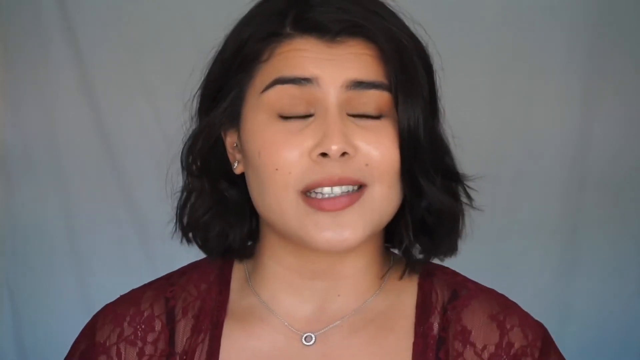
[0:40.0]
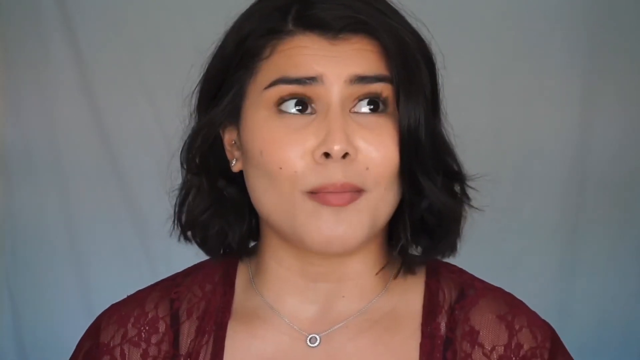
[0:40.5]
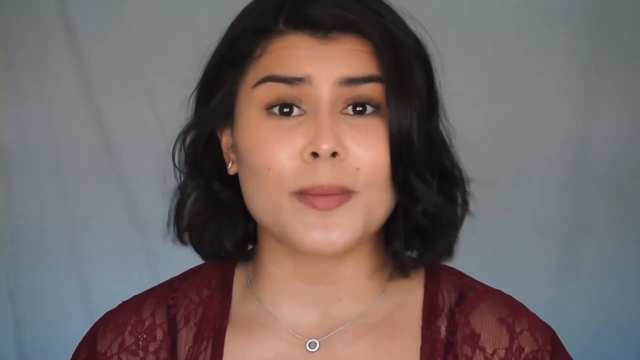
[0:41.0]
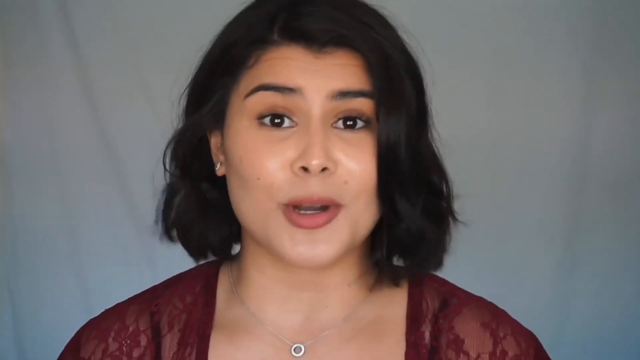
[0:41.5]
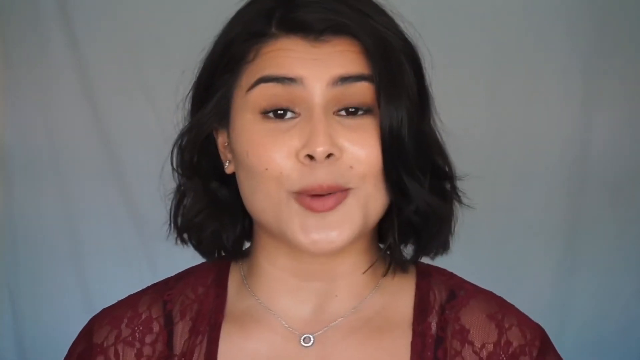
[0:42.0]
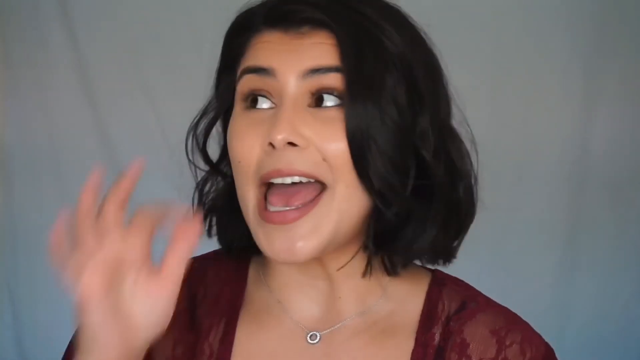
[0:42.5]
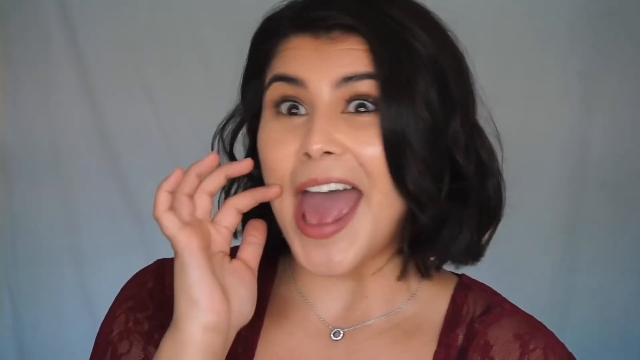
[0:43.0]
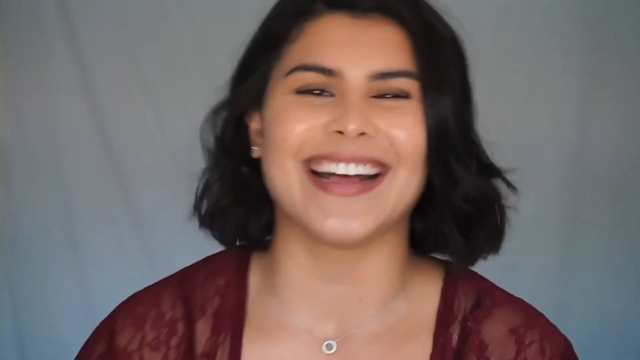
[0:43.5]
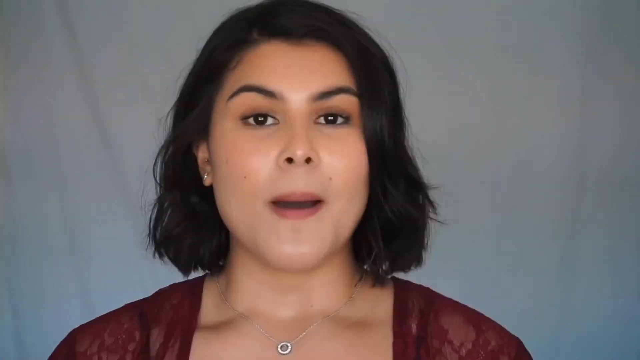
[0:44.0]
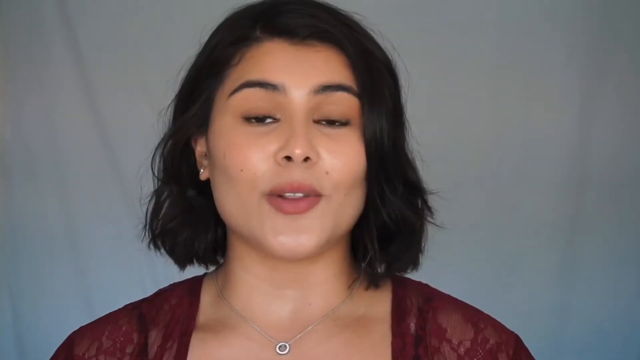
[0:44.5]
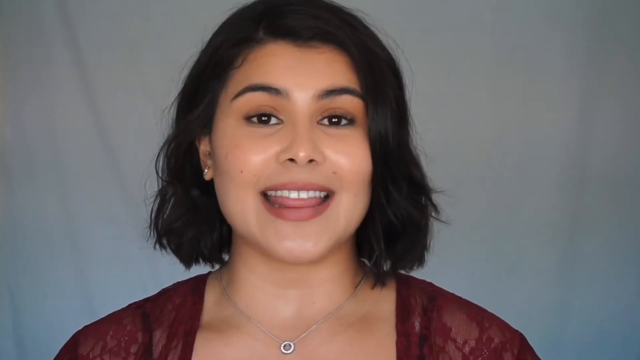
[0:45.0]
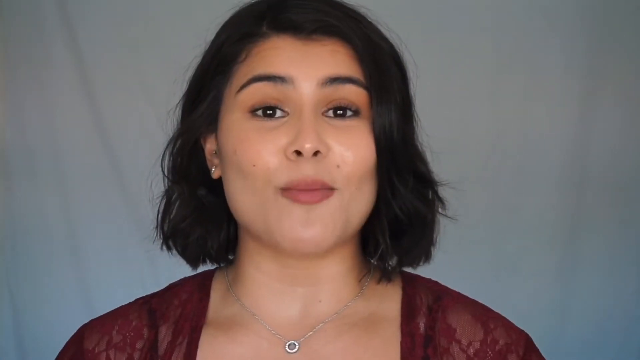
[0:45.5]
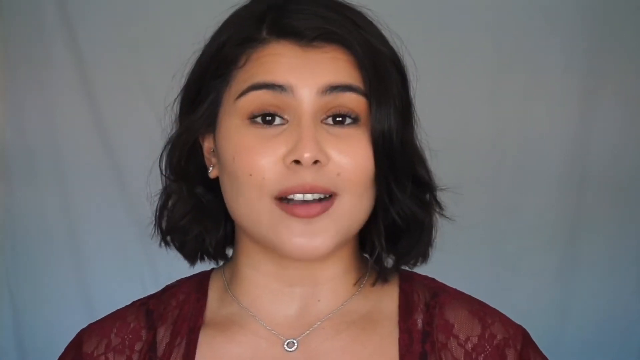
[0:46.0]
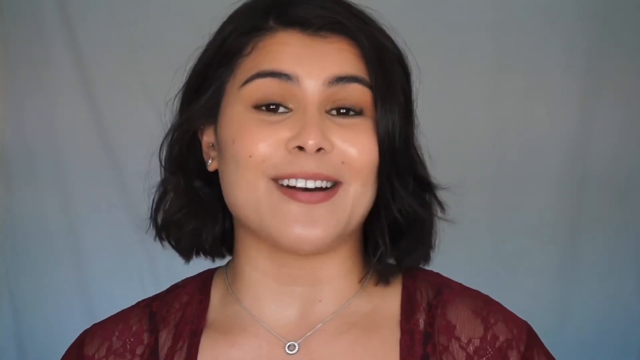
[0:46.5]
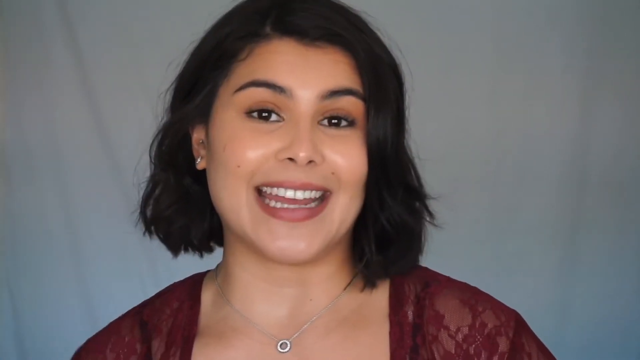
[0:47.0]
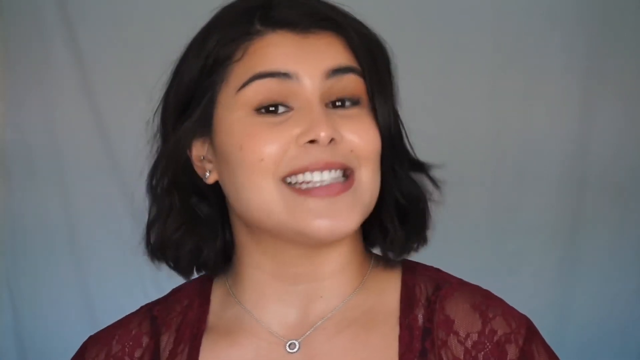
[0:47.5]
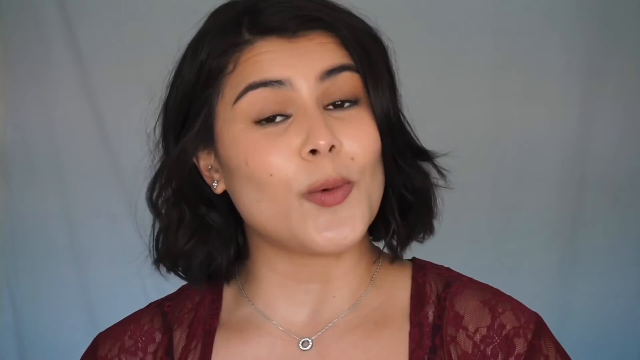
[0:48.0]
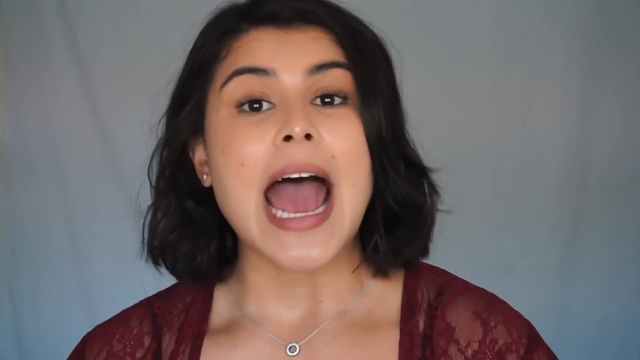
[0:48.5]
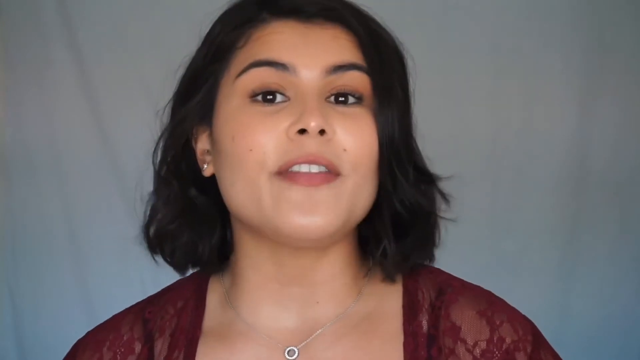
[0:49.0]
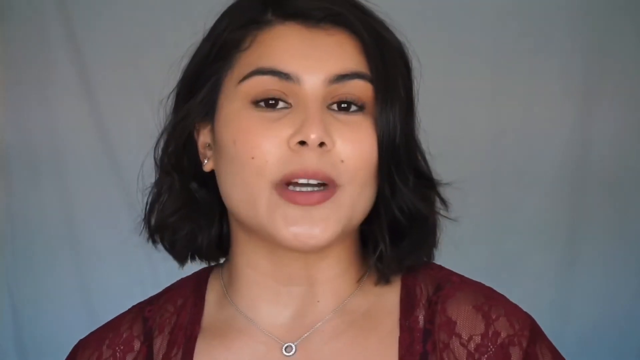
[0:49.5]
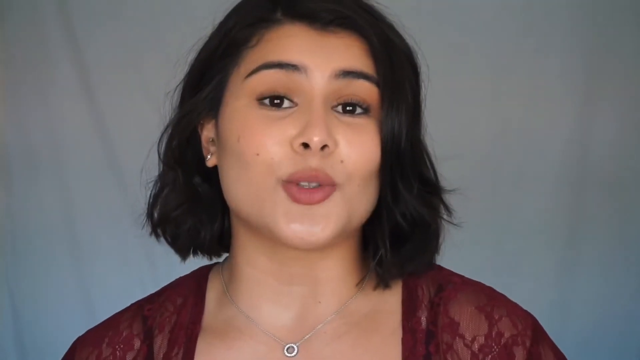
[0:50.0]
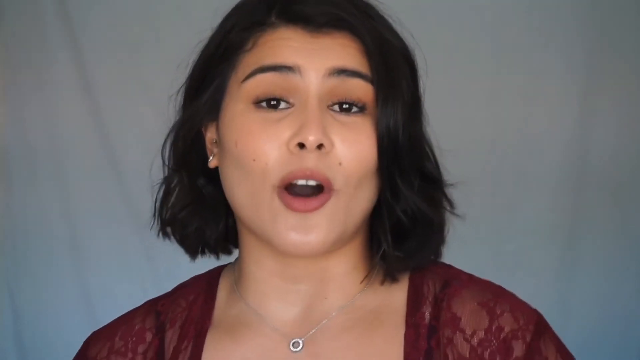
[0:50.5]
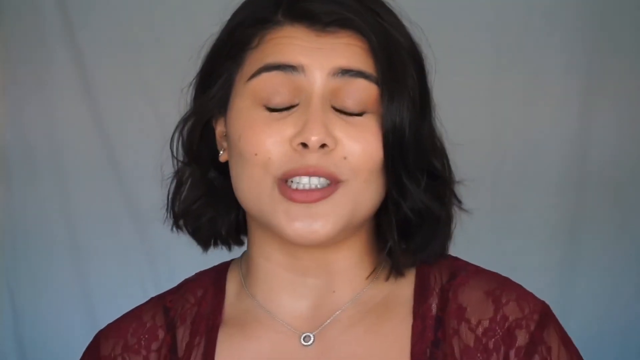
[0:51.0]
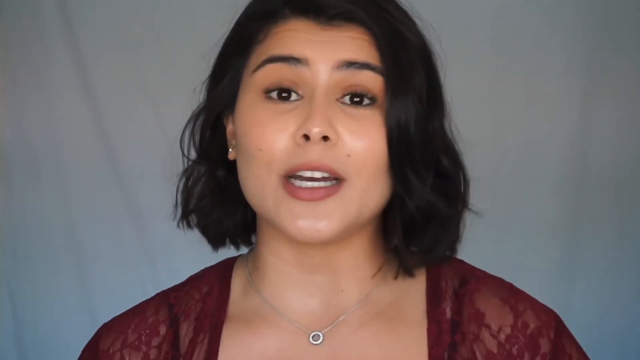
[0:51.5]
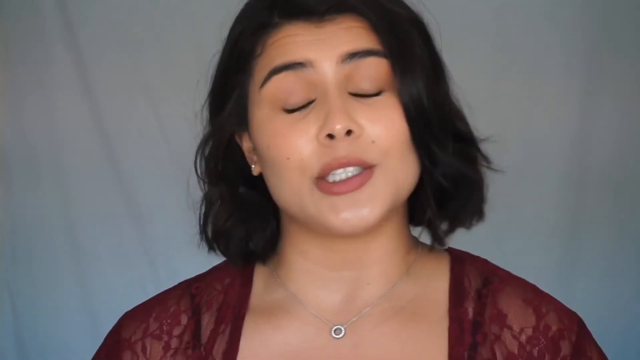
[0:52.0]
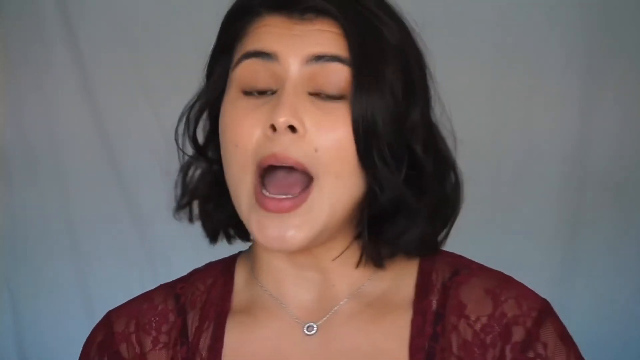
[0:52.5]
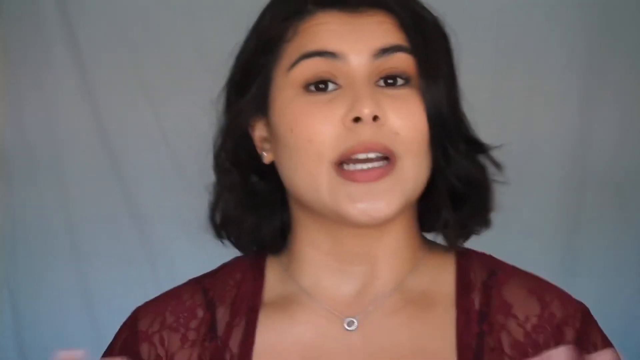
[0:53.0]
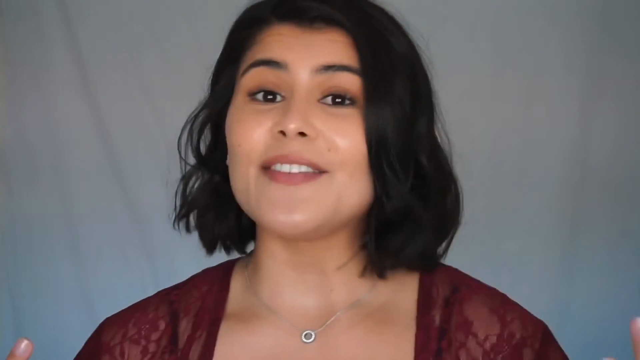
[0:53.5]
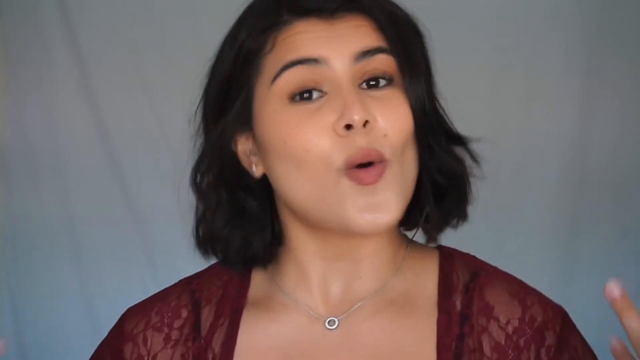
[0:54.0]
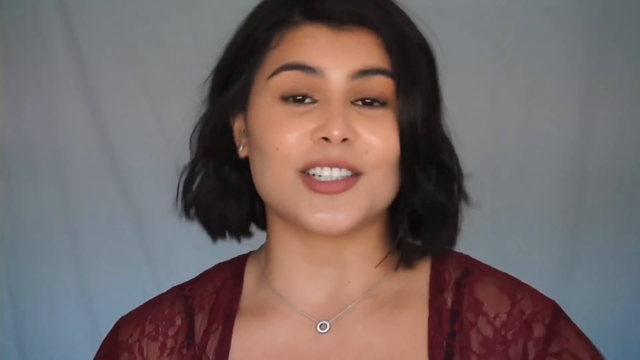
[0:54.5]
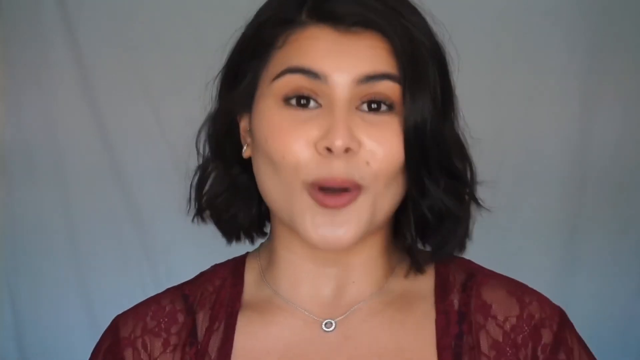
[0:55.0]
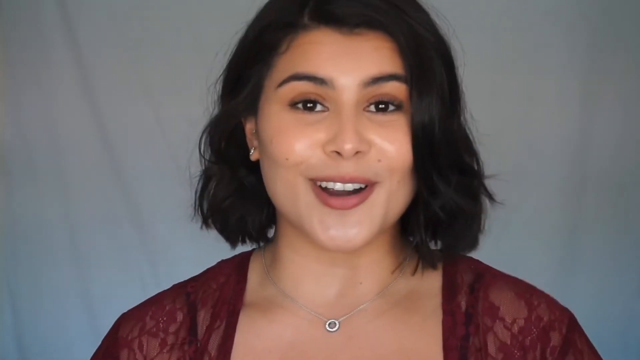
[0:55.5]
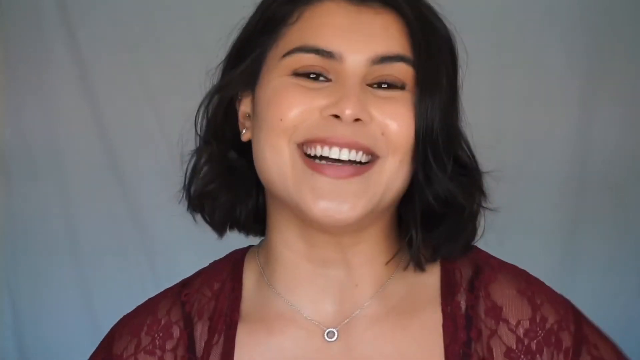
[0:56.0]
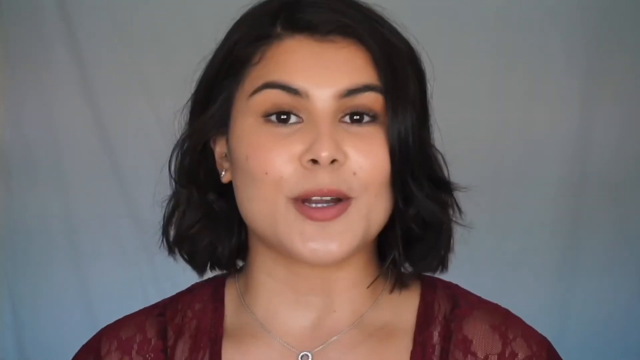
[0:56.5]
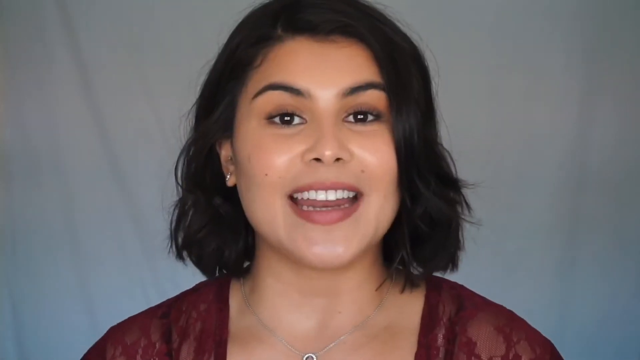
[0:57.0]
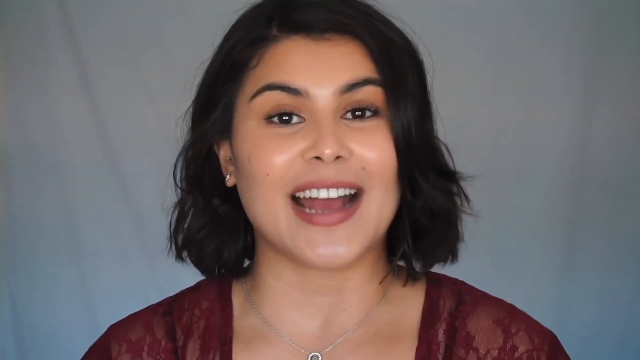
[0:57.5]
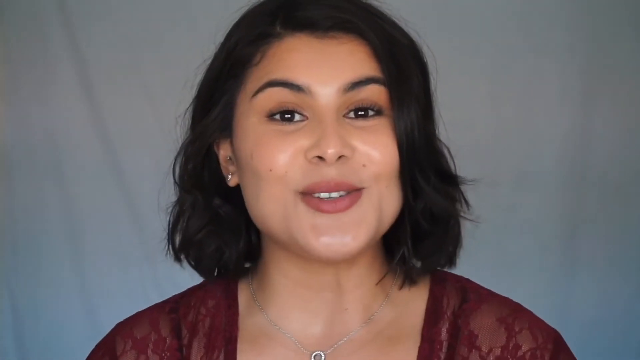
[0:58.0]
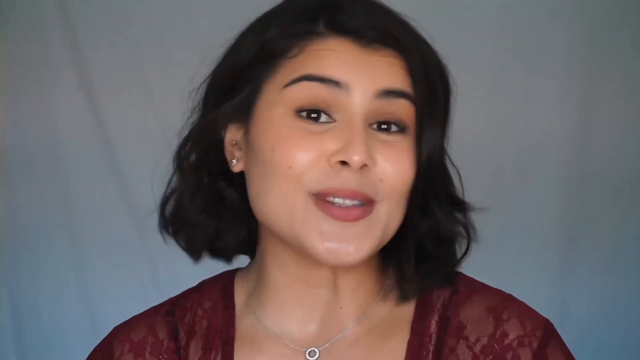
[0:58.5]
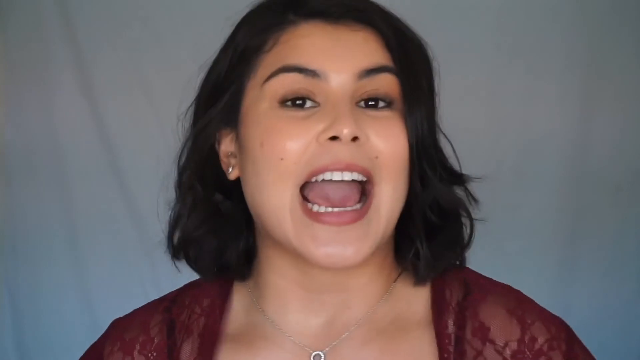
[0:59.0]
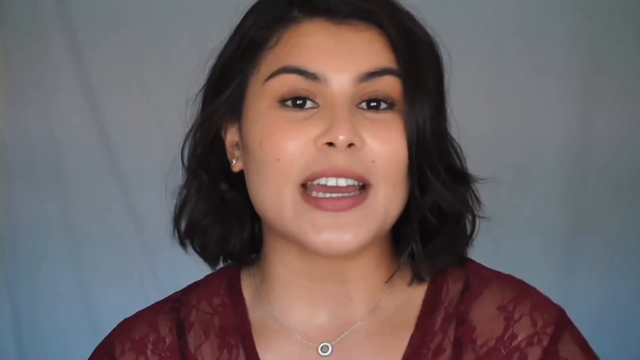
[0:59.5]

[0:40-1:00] The woman continues speaking directly to the camera. She looks off to the left side of the frame with a kind of cheeky expression in her eyes and puts her hand up to her mouth in a kind of open-palm pose, then looks back at the camera, takes her hand away and laughs wholeheartedly. After a jump cut she is in the same position, still speaking to the camera; she looks slightly more serious, and her speech seems to have slowed down slightly. She drops her right shoulder as she talks and leans into the camera slightly with a much more earnest expression, moving her body slightly and raising her left hand into the frame to emphasise her point. Then she smiles more broadly again. After another jump cut she continues talking directly into the camera in a very close shot showing only the tops of her shoulders and her head, with even the very top of her head outside the frame.